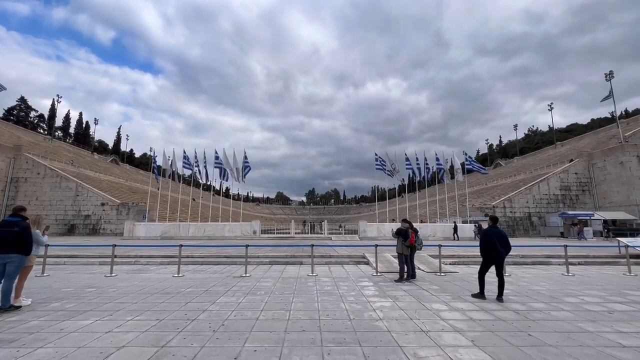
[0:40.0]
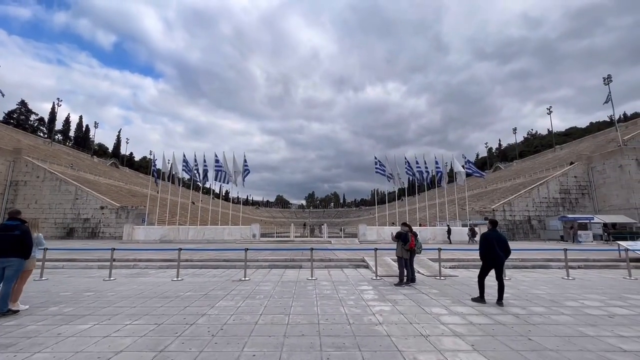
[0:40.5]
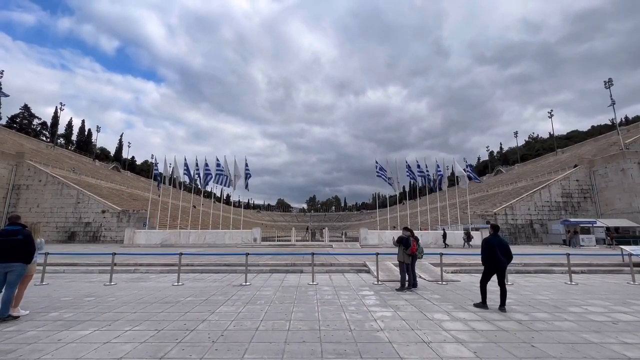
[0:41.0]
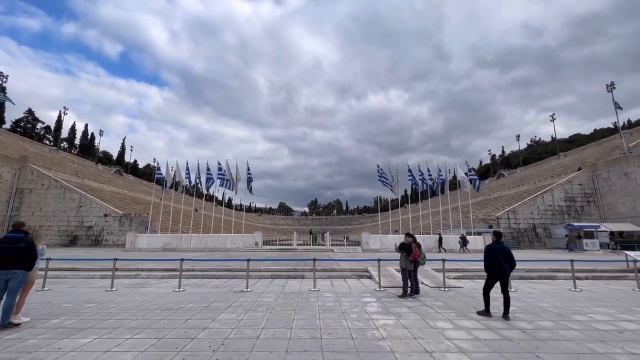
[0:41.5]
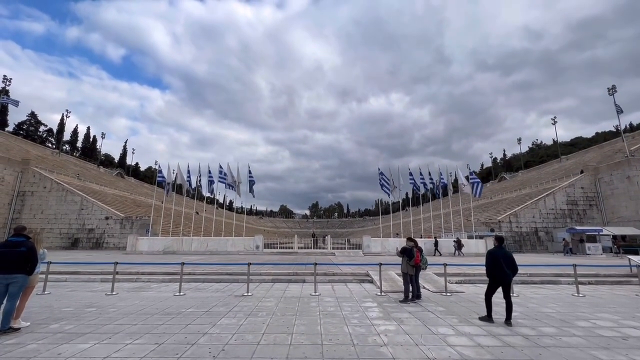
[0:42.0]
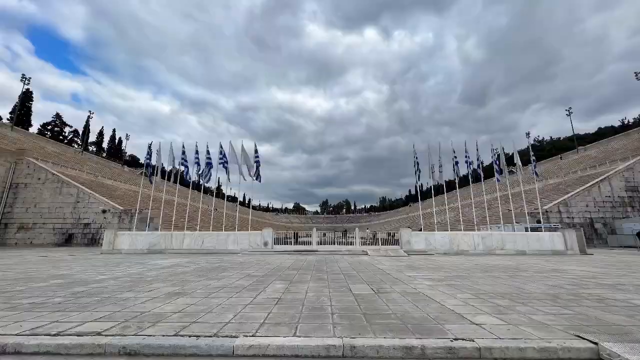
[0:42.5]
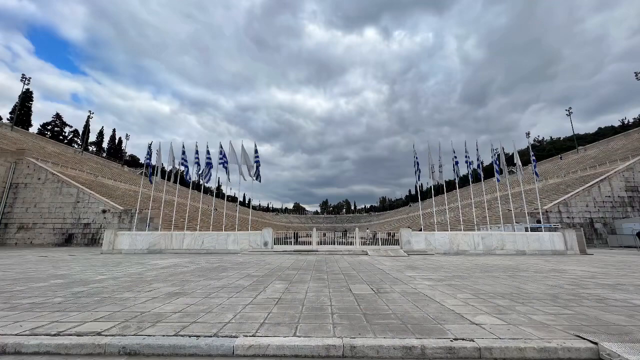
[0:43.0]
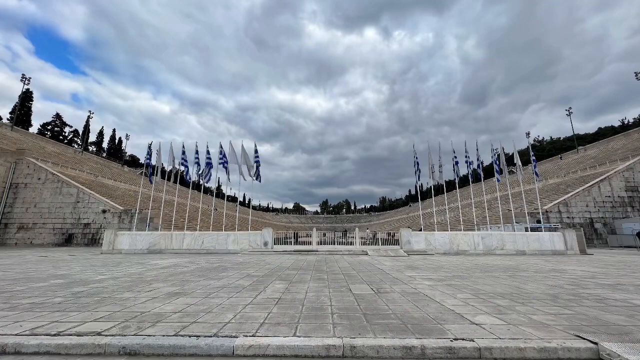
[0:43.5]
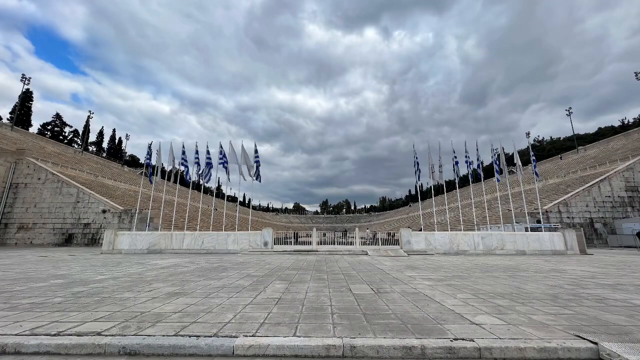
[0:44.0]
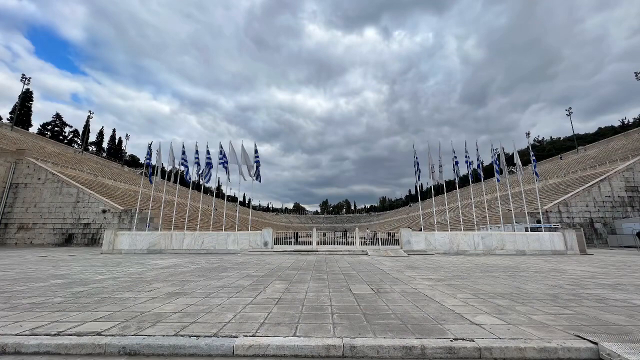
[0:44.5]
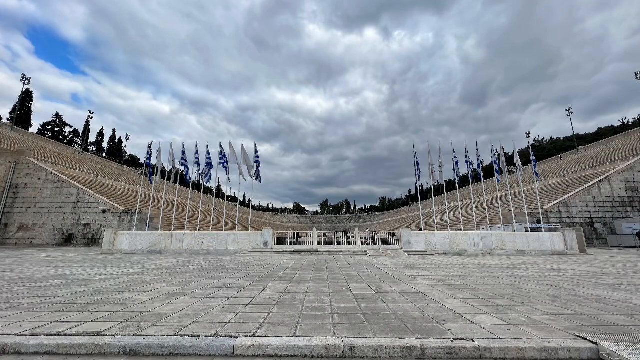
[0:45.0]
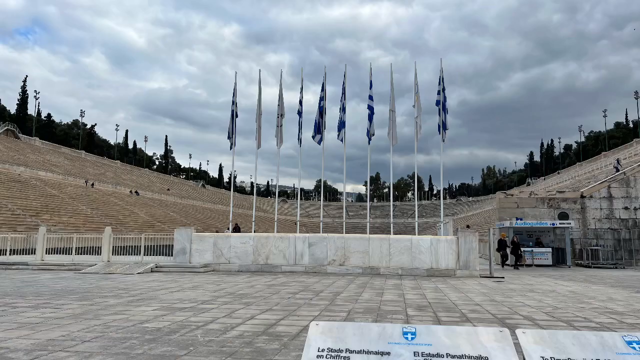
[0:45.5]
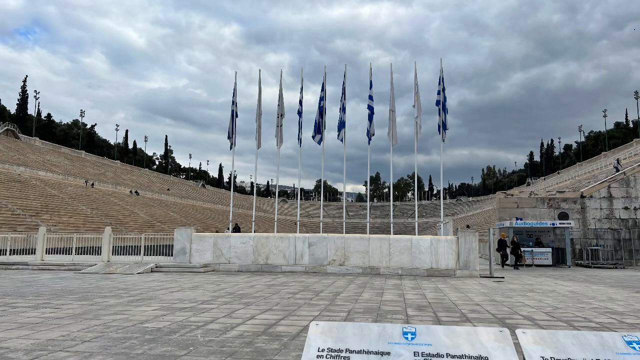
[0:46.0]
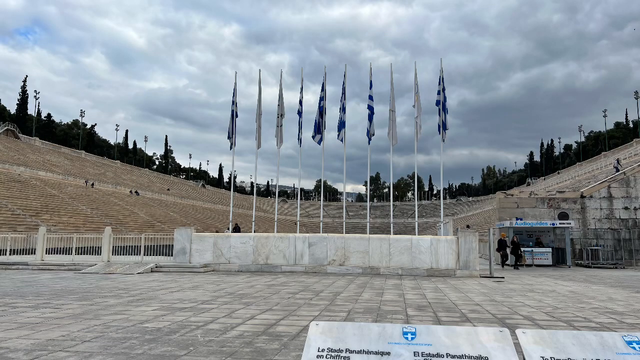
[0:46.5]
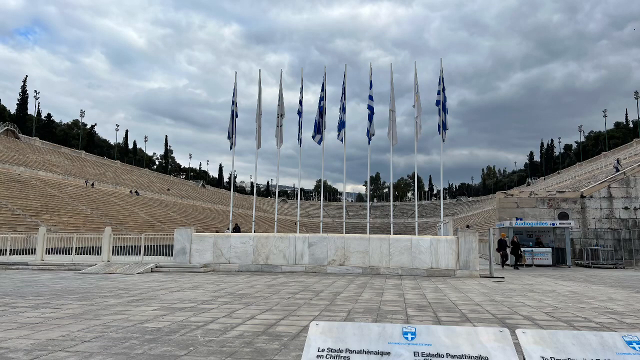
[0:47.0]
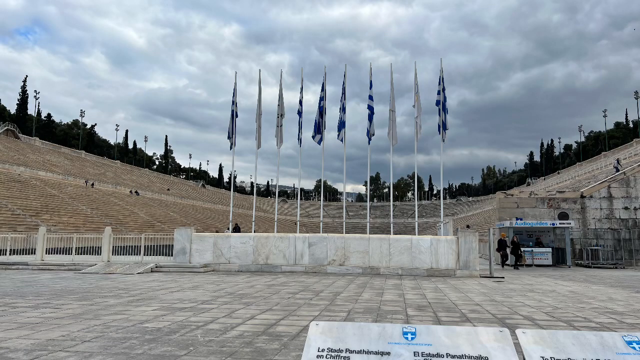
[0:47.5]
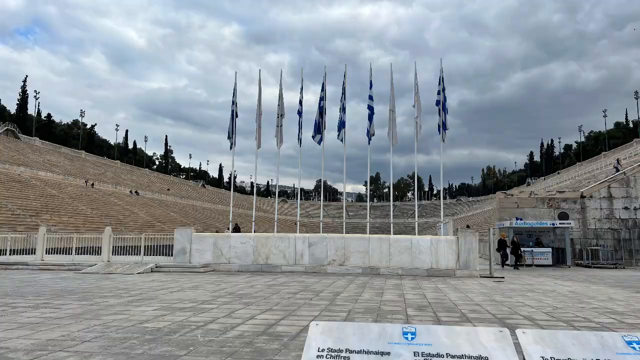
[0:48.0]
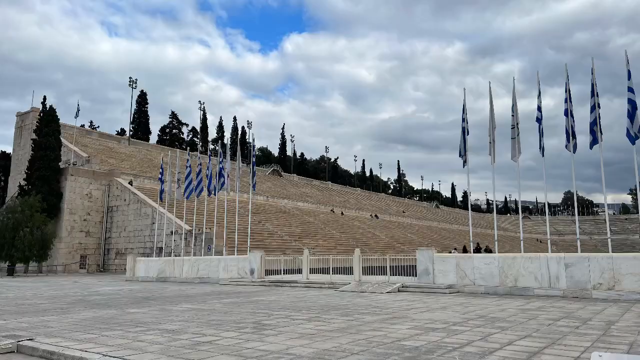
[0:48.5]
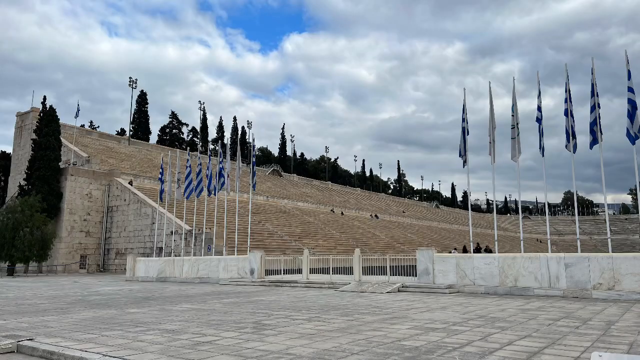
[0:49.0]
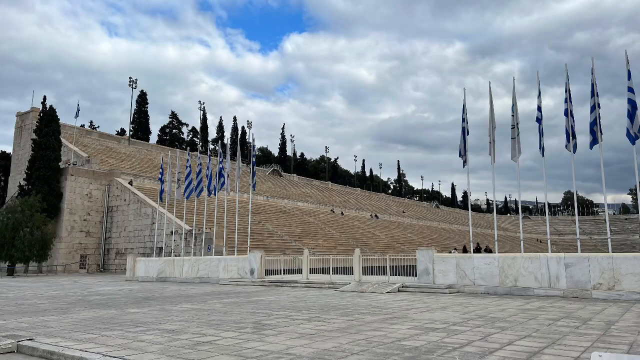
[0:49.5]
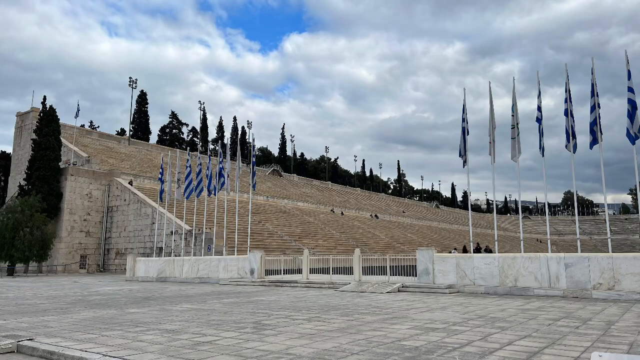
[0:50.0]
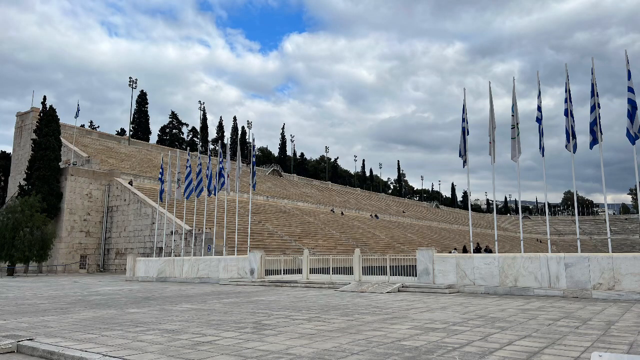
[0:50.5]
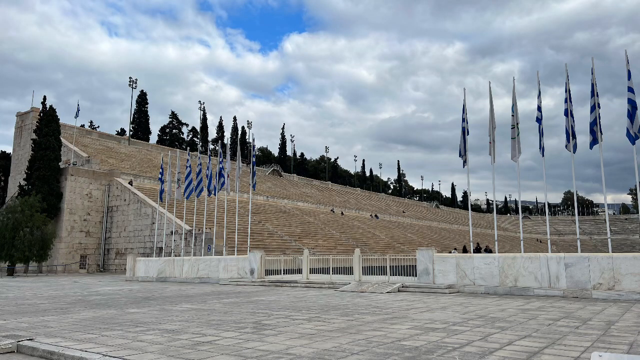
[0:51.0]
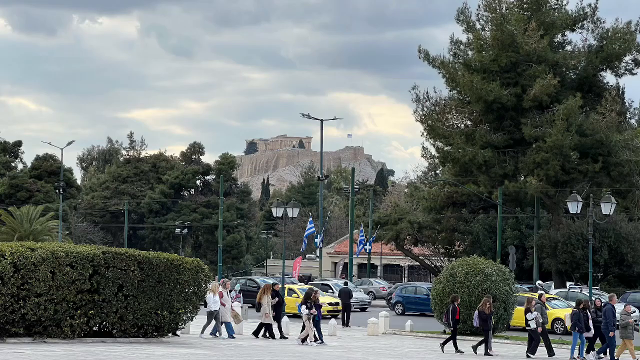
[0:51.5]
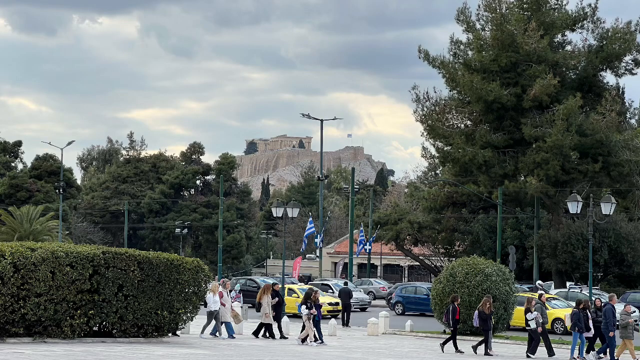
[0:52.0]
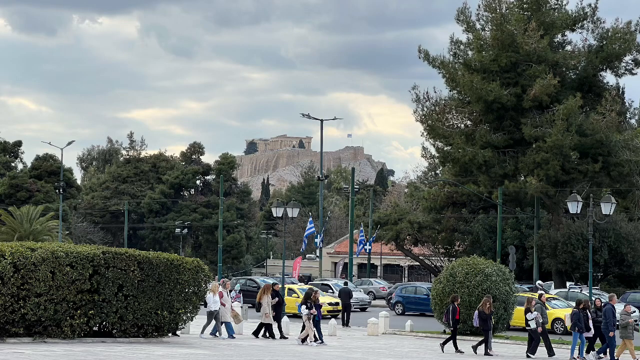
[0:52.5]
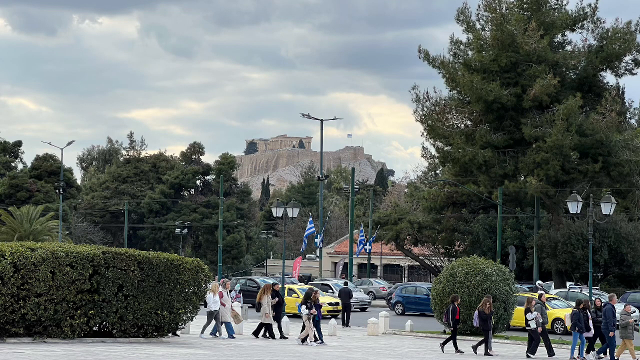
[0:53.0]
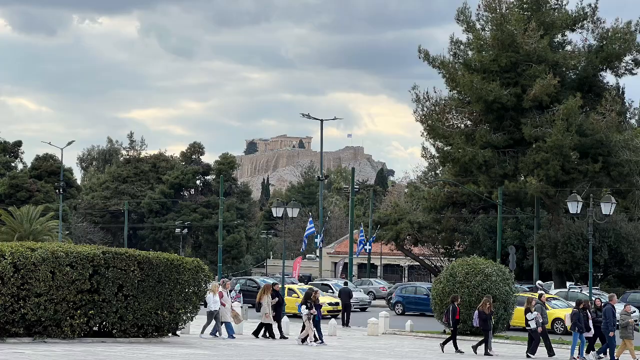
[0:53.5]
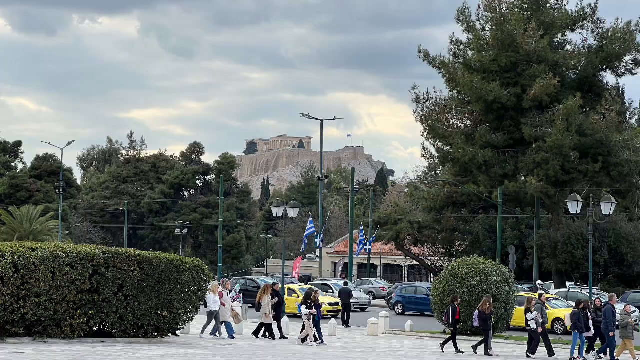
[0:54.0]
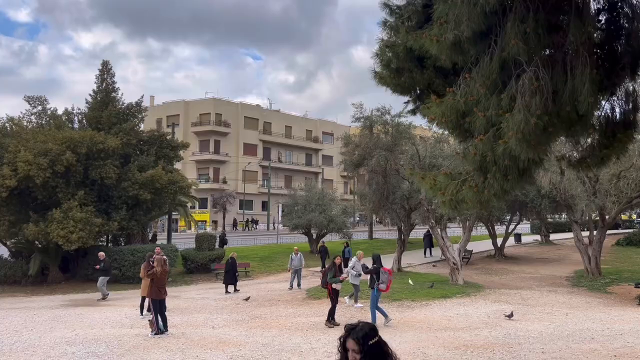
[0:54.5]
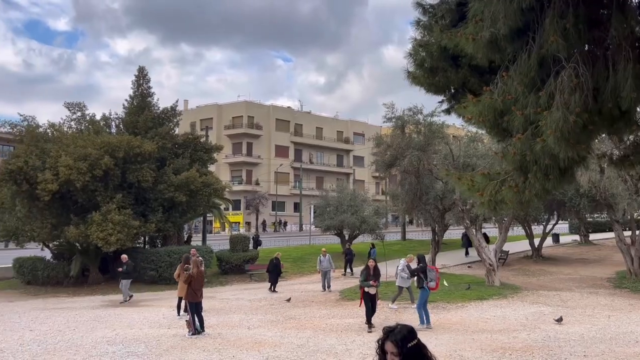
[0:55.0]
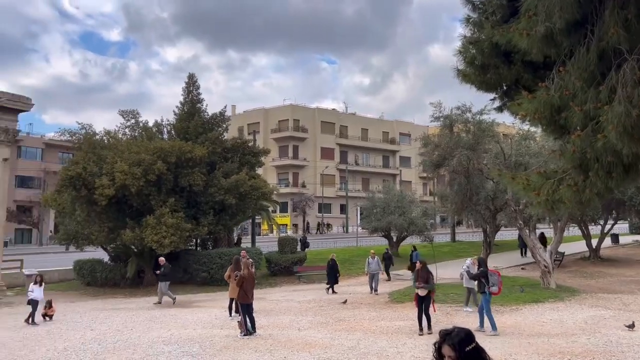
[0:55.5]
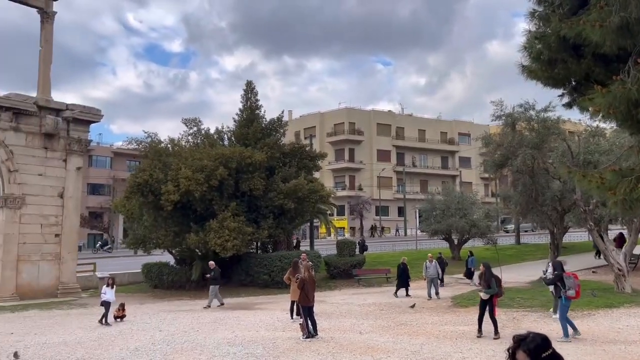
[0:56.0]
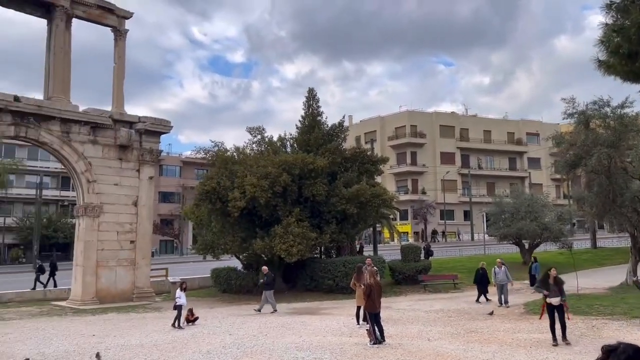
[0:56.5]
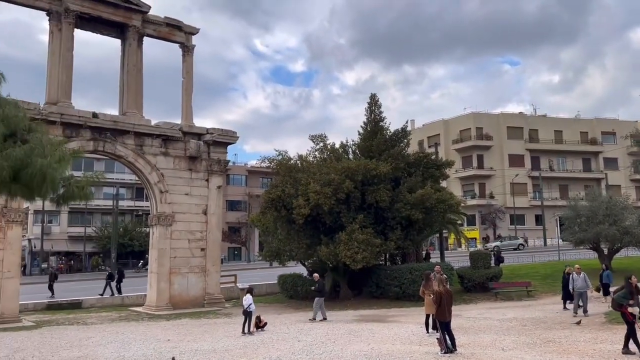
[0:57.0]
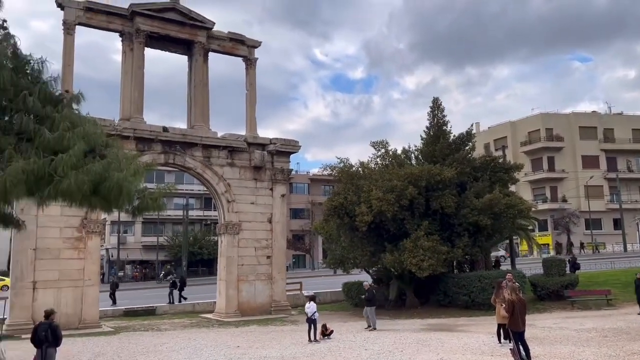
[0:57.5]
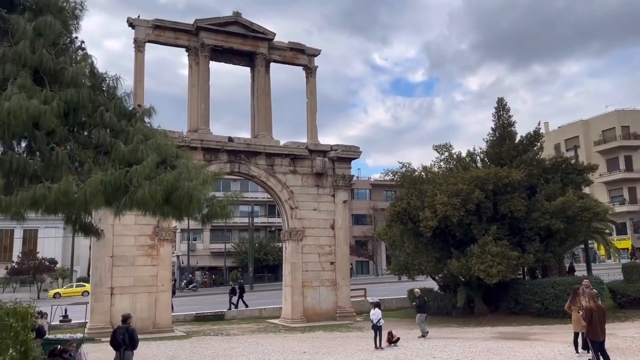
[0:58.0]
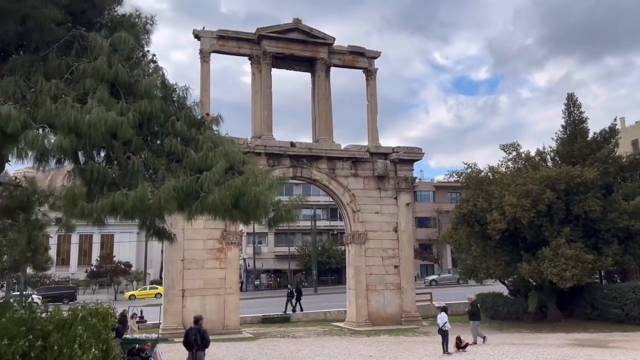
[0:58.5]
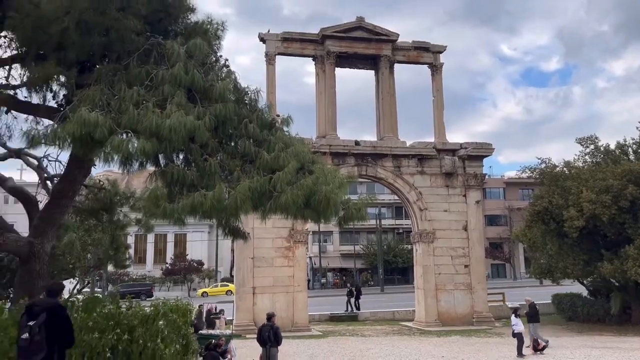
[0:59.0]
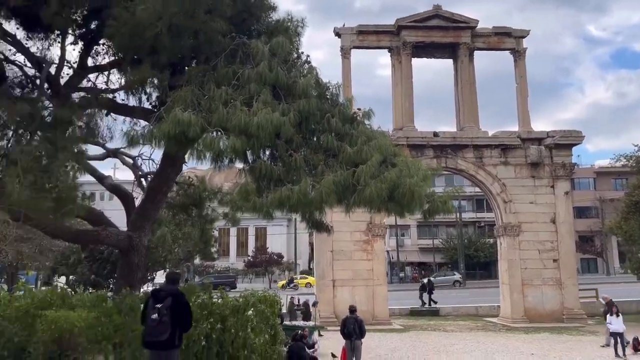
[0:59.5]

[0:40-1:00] Four or five still shots of the amphitheater are shown, followed by a city area where the focus is on some ruins, including a few remaining gates, mostly surrounded by a modern area. Next, something that almost looks like the Acropolis is seen from a distance, up on a hill. The video then returns to a city area with trees and buildings and a ruin that looks almost like an arch, possibly an ancient gateway or part of a former building: a stone arch and a few remnants surrounded by modern structures. It is in what looks like a city park, with trees, greenery, paths and people milling about looking at it, and apartment buildings and other structures around the gated area in the distance.